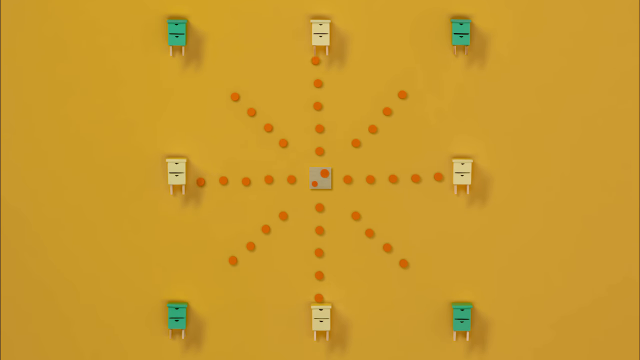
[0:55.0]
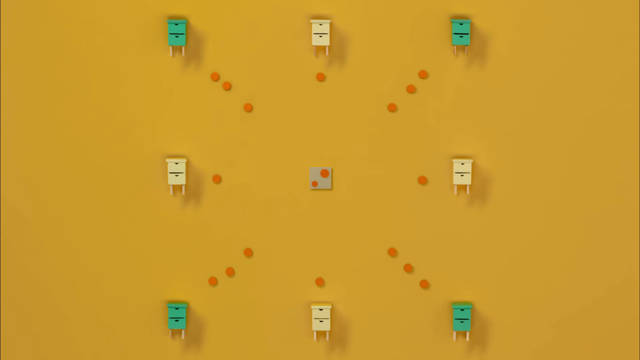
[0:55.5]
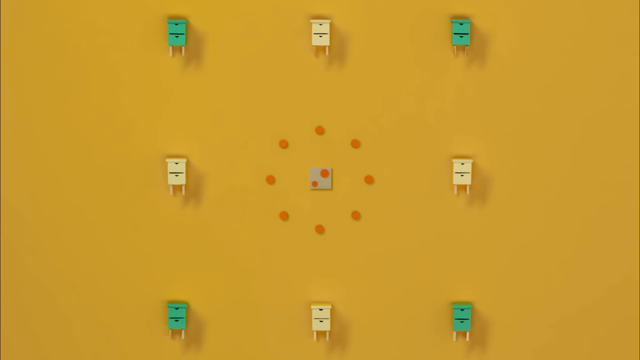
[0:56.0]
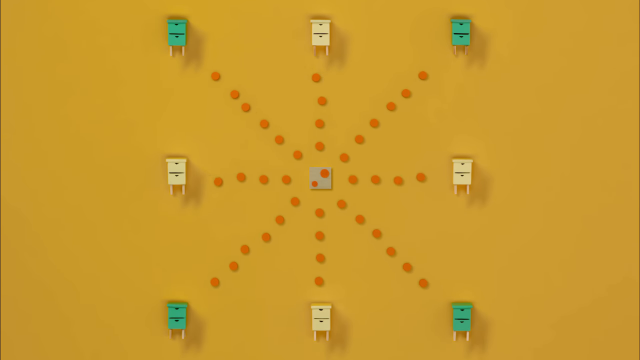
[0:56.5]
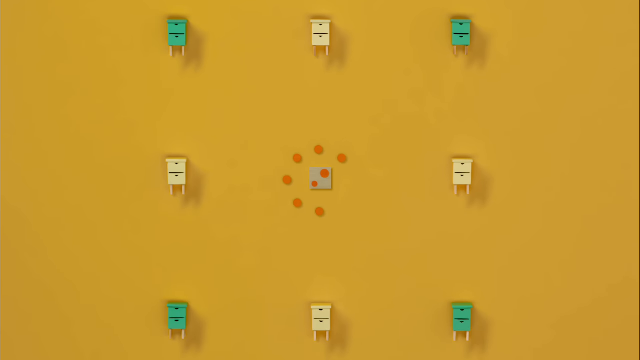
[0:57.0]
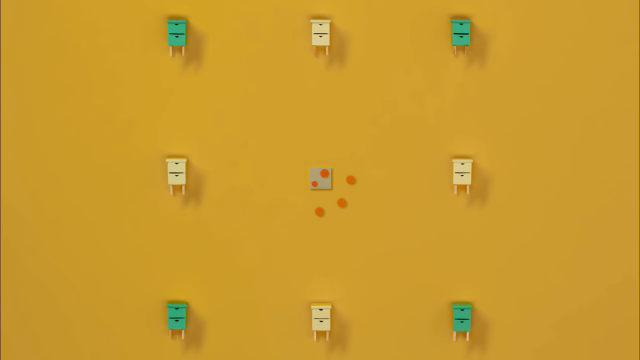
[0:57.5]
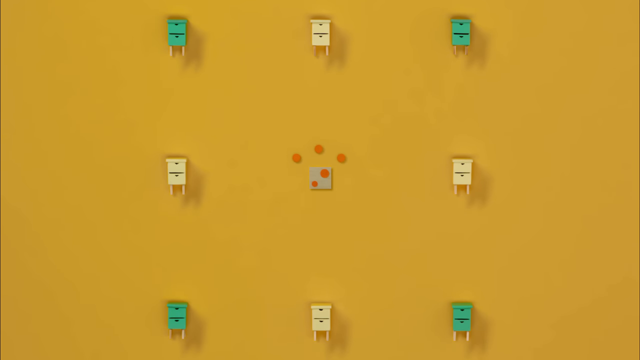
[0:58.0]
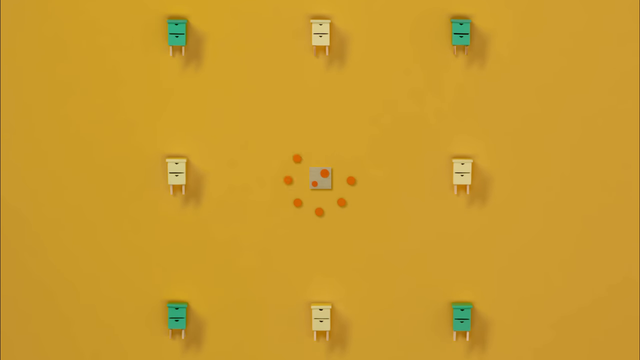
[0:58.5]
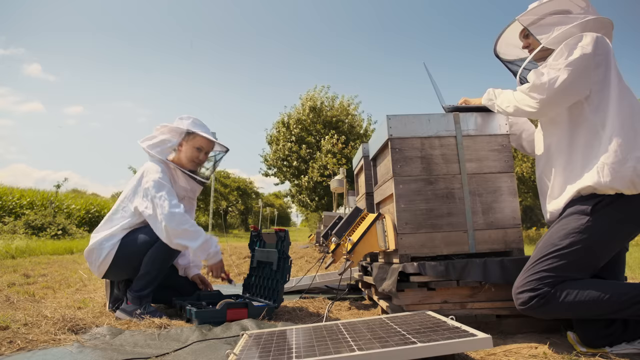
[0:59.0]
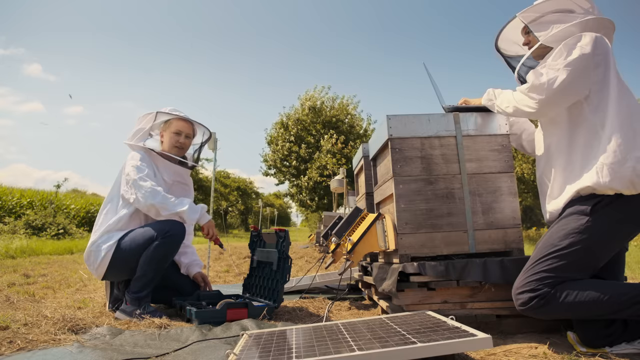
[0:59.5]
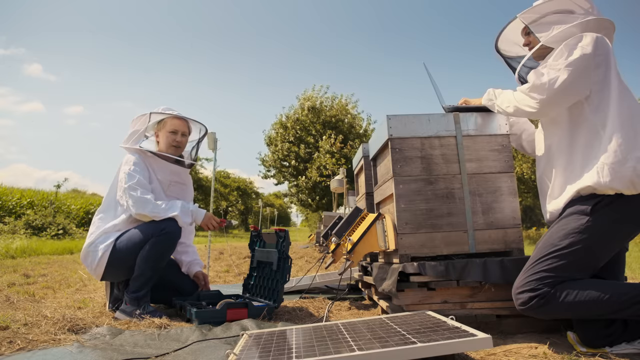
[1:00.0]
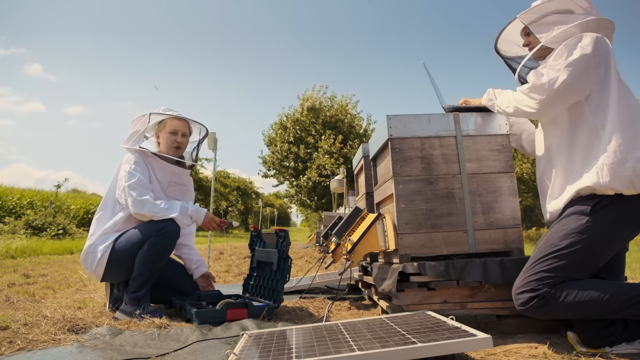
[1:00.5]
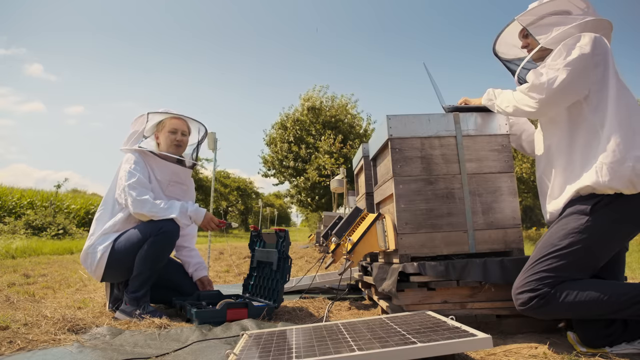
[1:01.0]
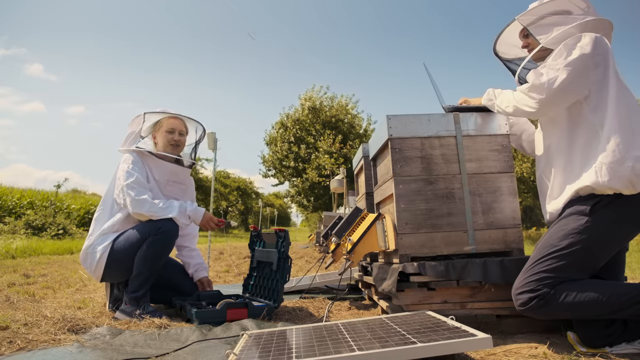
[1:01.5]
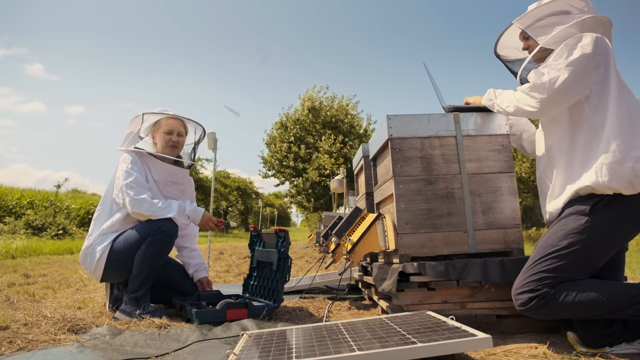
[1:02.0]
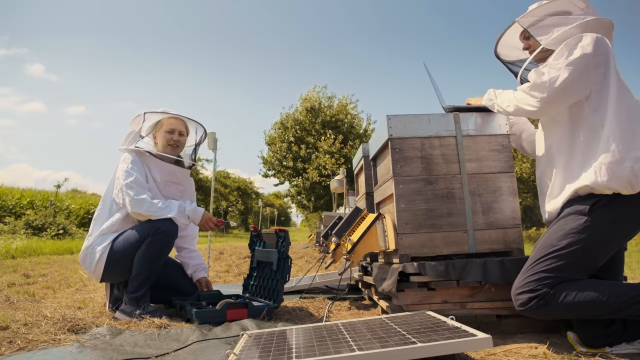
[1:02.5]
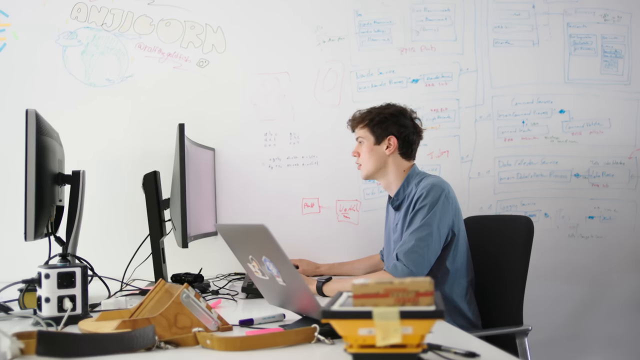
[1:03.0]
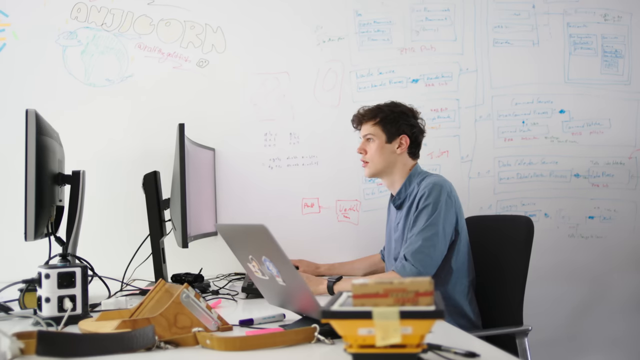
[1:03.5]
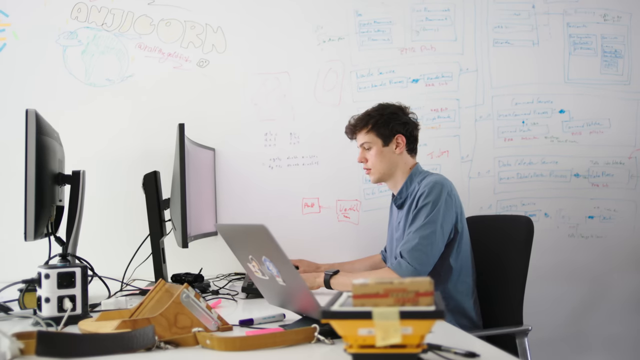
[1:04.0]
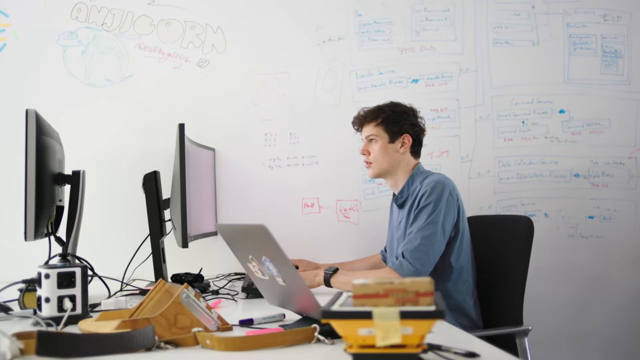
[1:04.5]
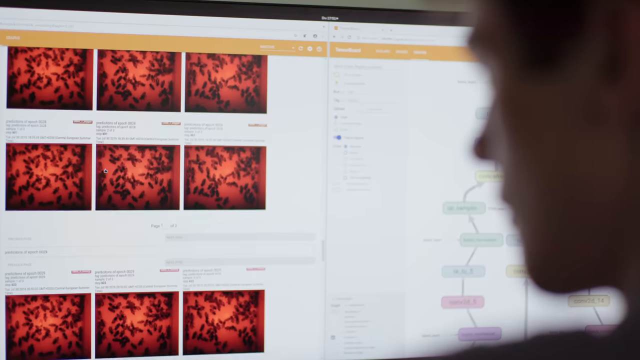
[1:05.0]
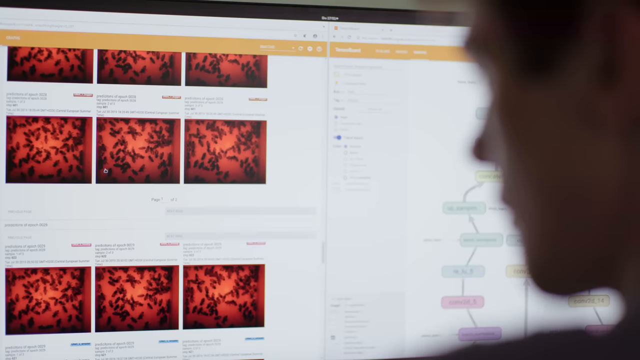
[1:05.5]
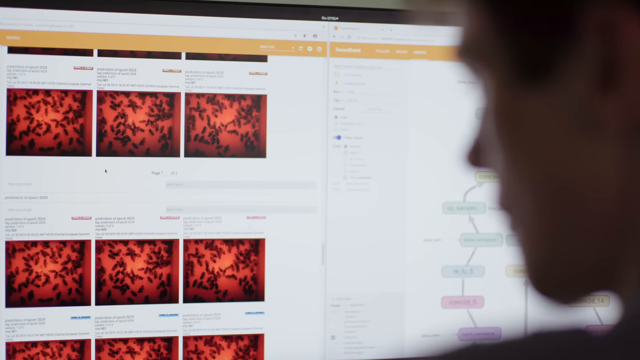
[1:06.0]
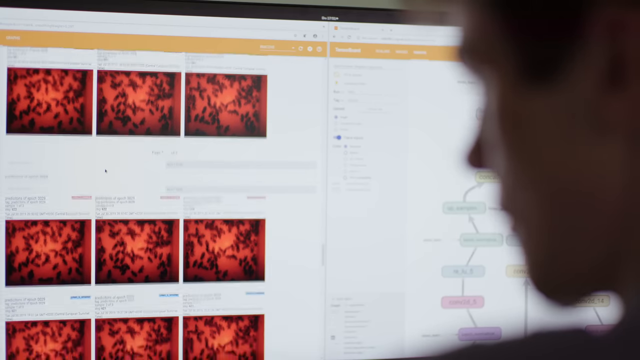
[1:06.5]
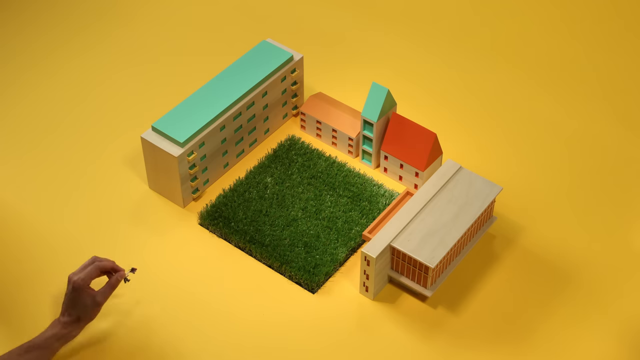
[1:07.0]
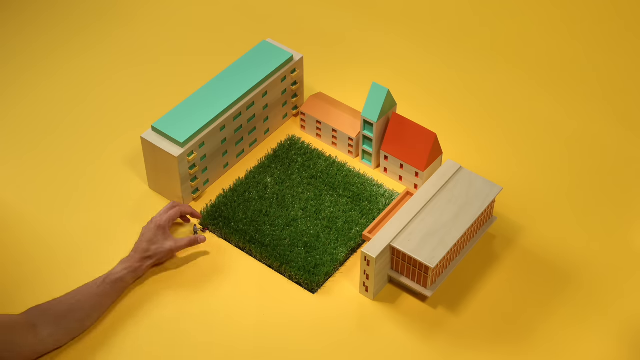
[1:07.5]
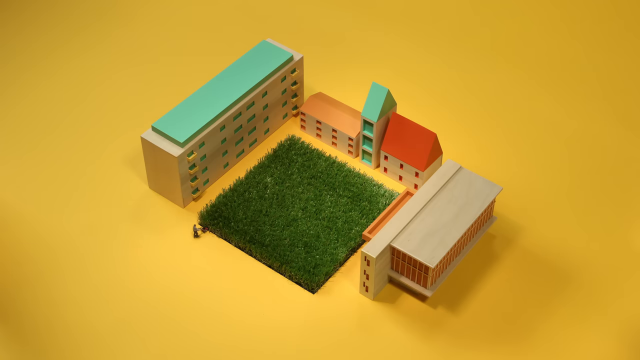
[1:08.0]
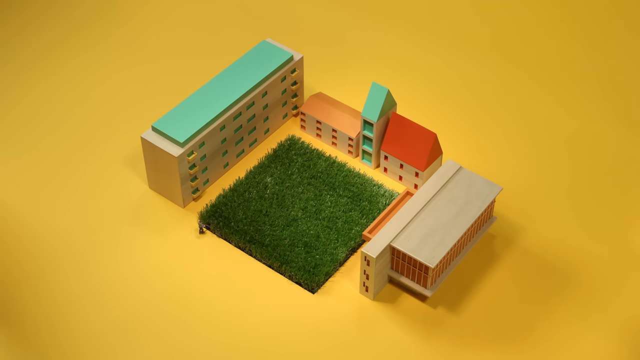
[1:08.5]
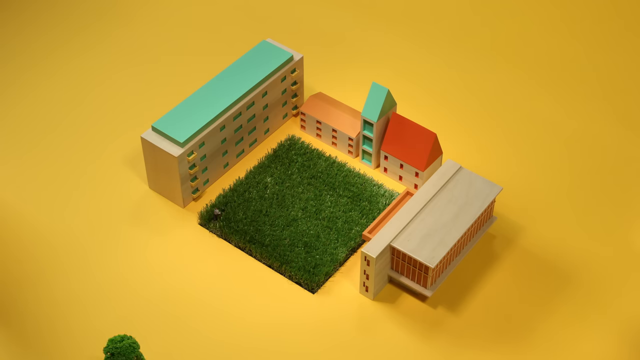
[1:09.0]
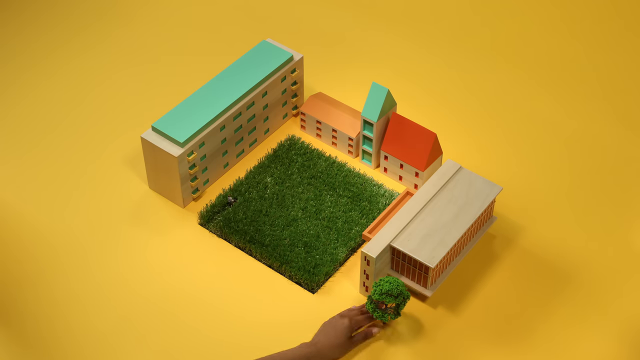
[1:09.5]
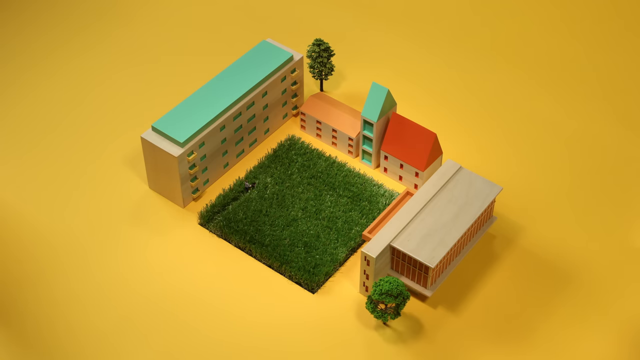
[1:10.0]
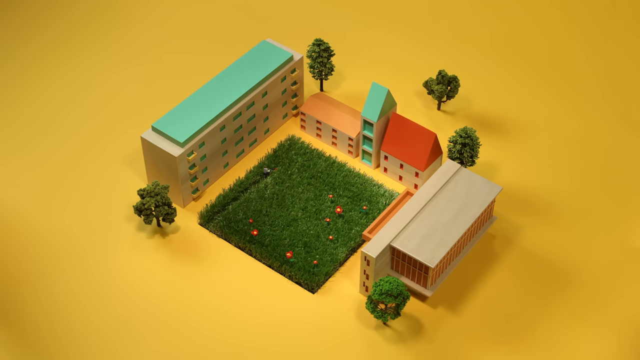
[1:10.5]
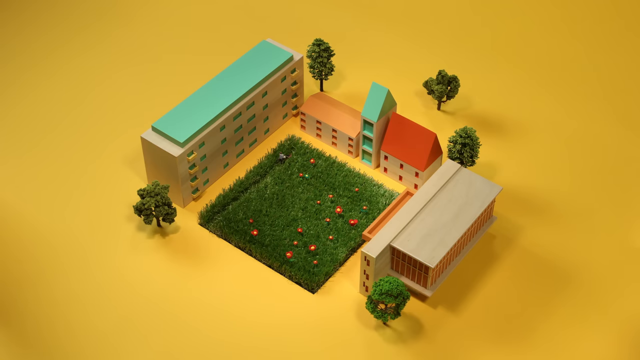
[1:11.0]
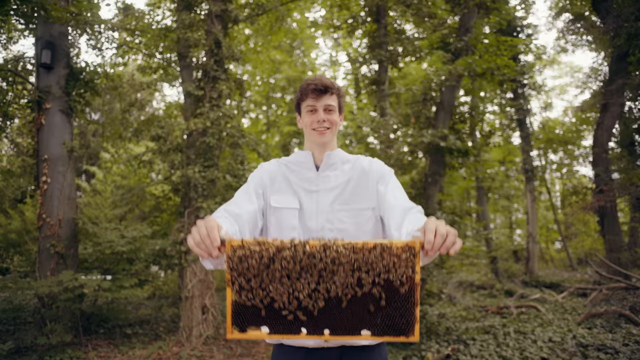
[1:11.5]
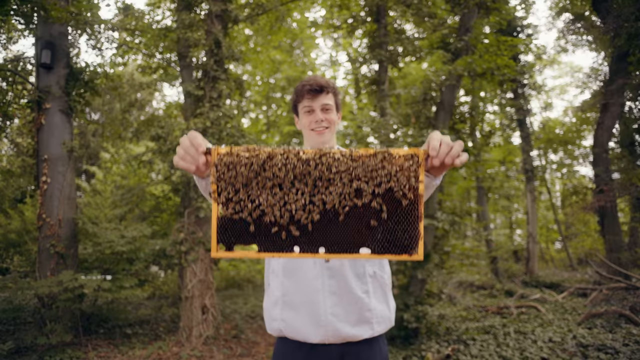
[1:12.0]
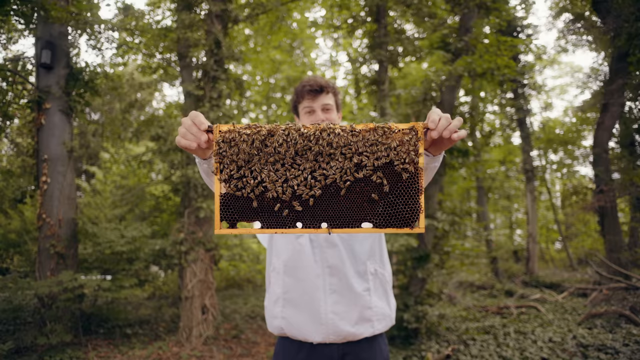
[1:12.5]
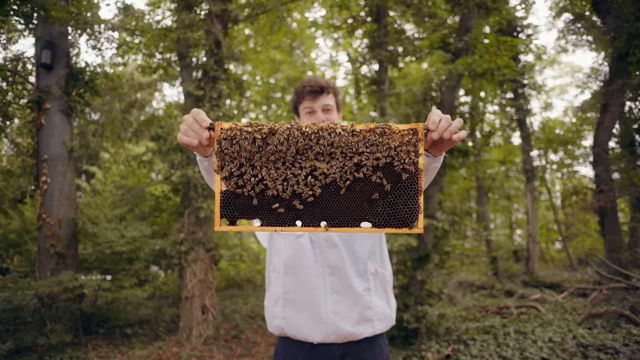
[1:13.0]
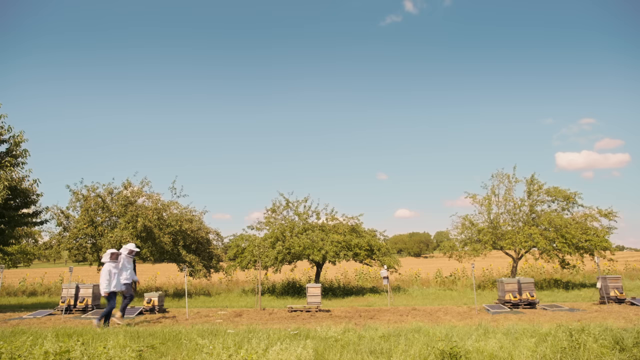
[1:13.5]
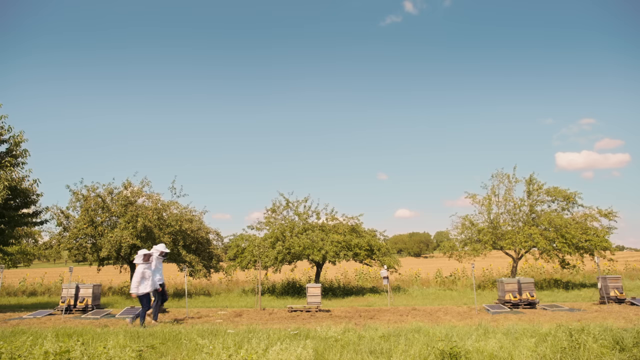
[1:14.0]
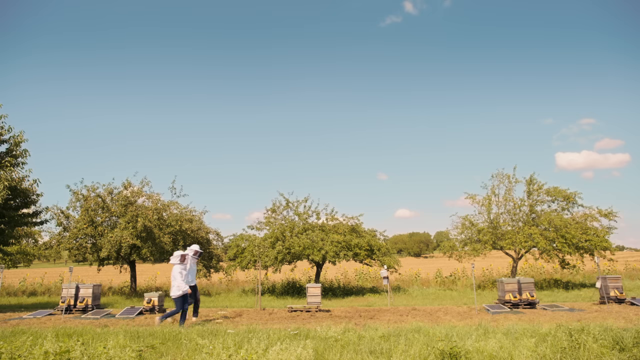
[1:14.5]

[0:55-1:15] The infographic showing in and out traffic for multiple hives continues, then the video pivots to two individuals outdoors wearing protective headgear. The man looks to be on his laptop, while the woman has some type of toolbox or instrument. The electronic counters are on the hives, and there are solar panels on the ground, one in front of the three hives and the other in the back of them. The view then moves to the man, who has taken off the protective gear and appears to be sitting indoors in front of a whiteboard with a number of visualizations and charts on it. He wears a blue shirt, stares at a curved screen, and has his laptop to his left. As he scrolls, a demonstration of a building is shown.